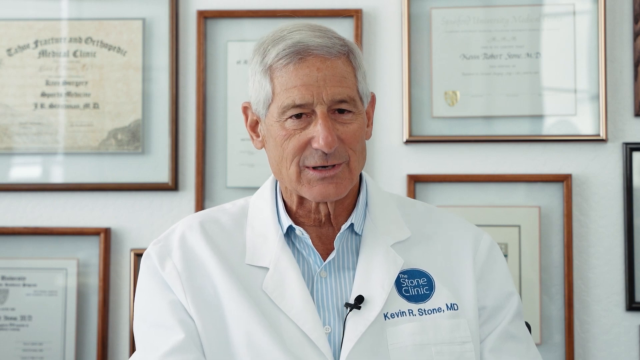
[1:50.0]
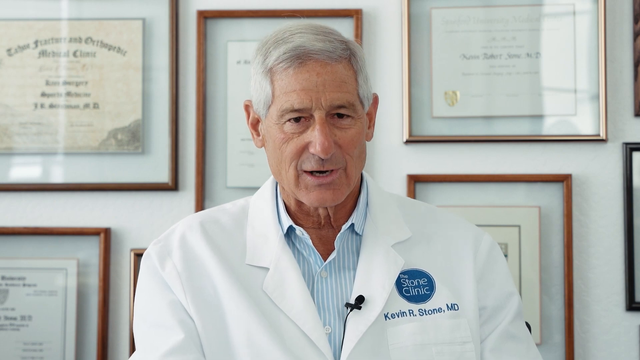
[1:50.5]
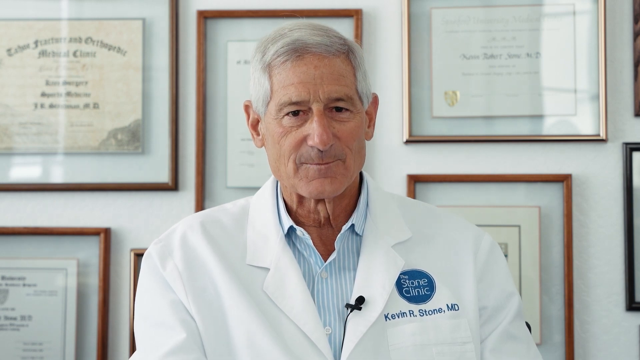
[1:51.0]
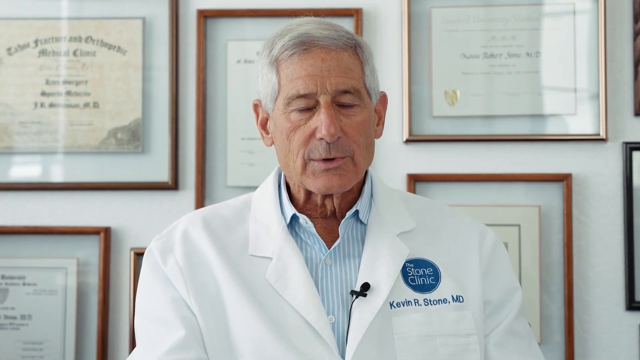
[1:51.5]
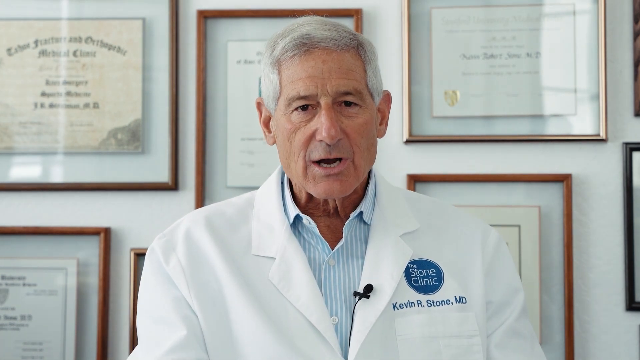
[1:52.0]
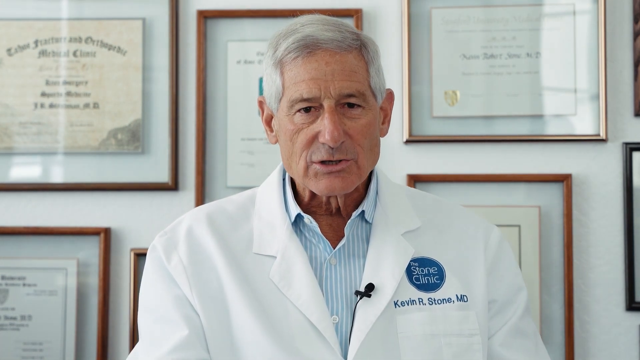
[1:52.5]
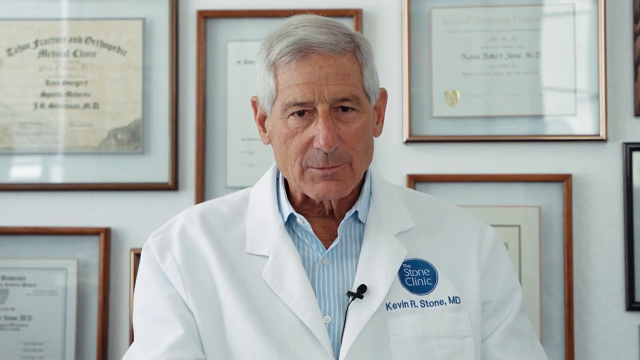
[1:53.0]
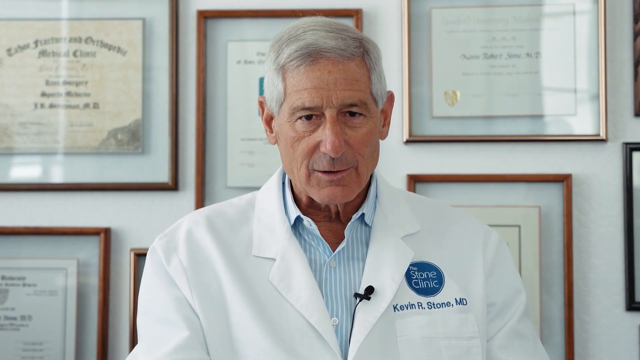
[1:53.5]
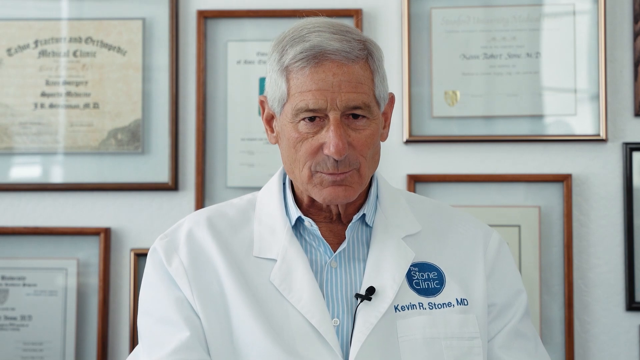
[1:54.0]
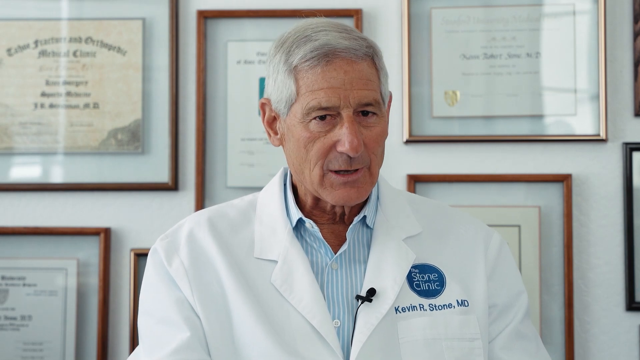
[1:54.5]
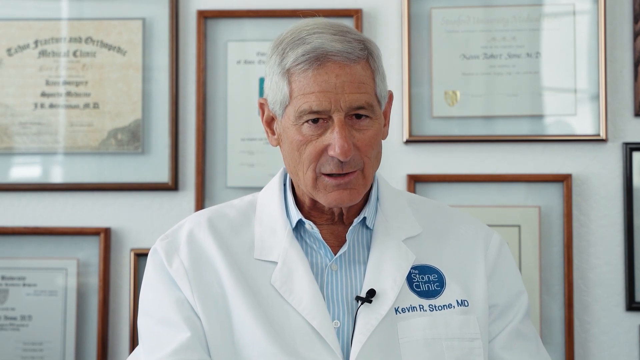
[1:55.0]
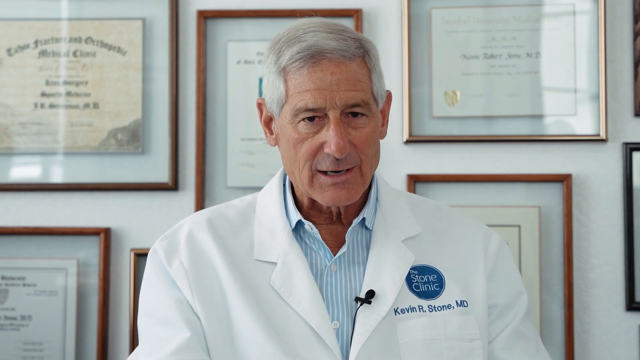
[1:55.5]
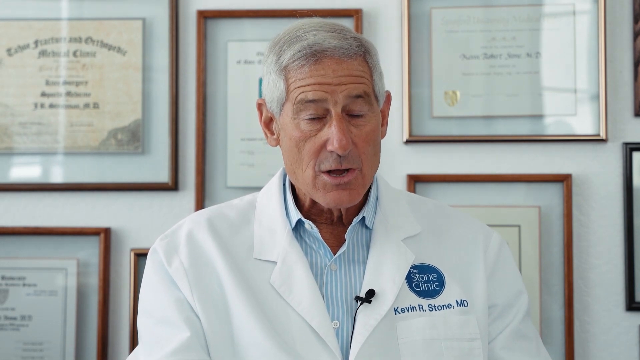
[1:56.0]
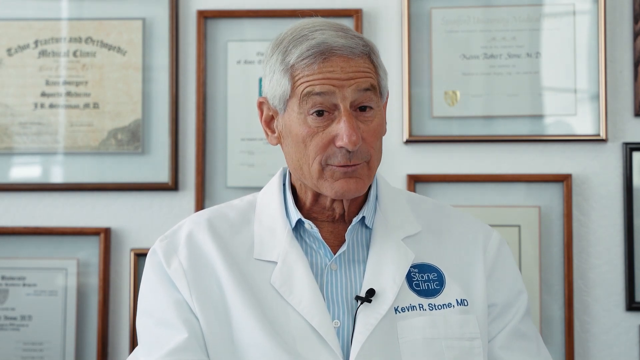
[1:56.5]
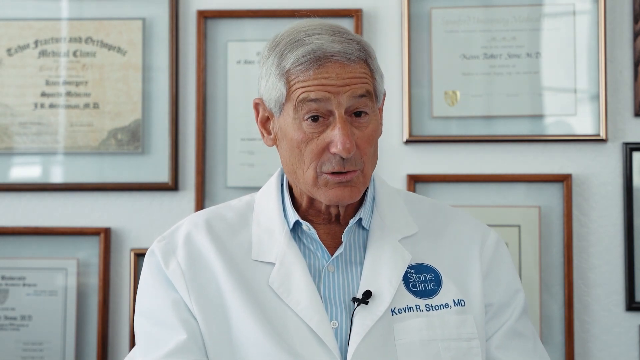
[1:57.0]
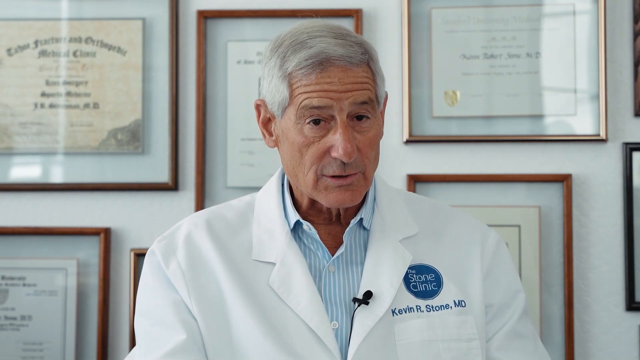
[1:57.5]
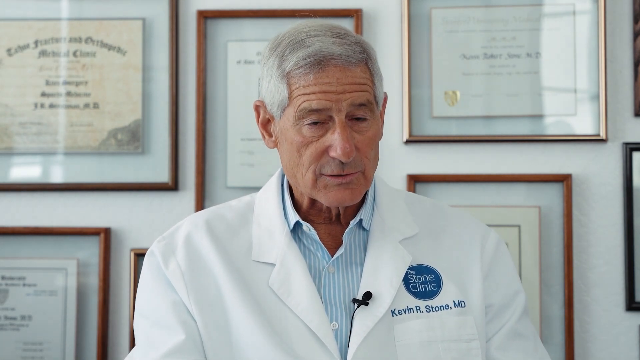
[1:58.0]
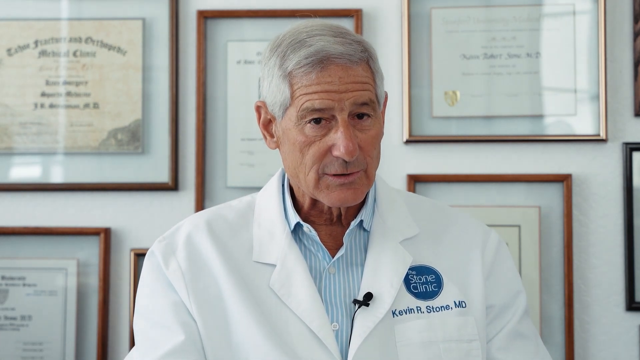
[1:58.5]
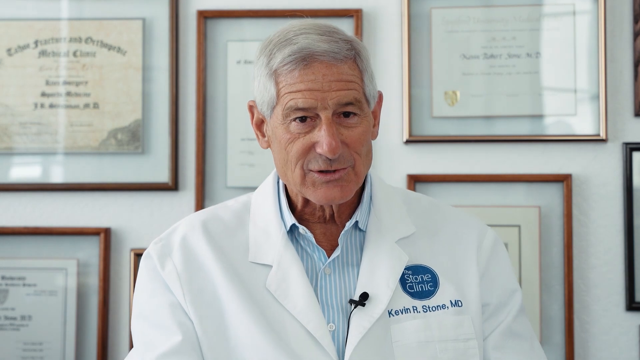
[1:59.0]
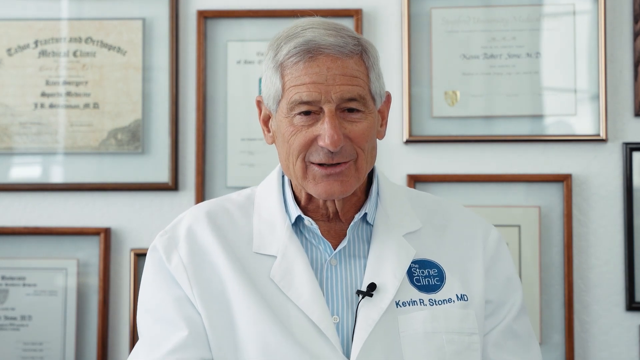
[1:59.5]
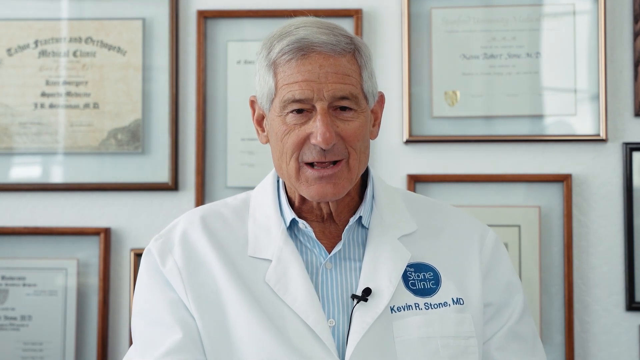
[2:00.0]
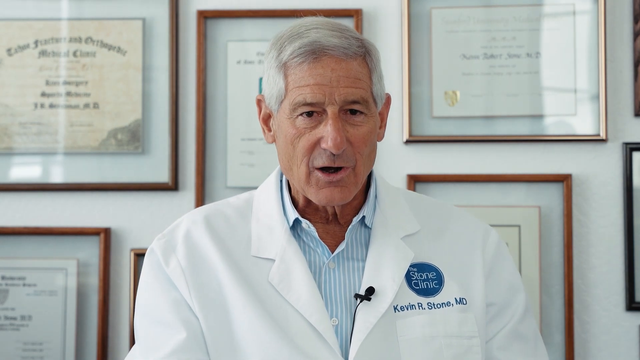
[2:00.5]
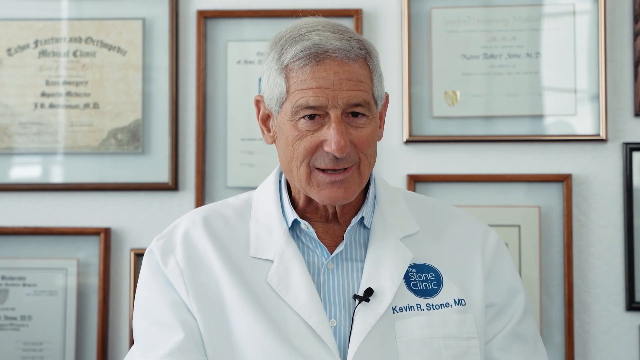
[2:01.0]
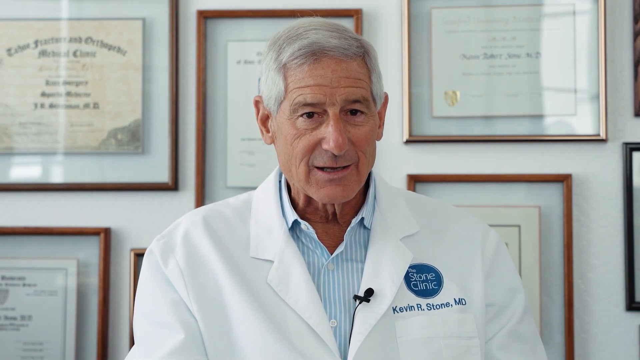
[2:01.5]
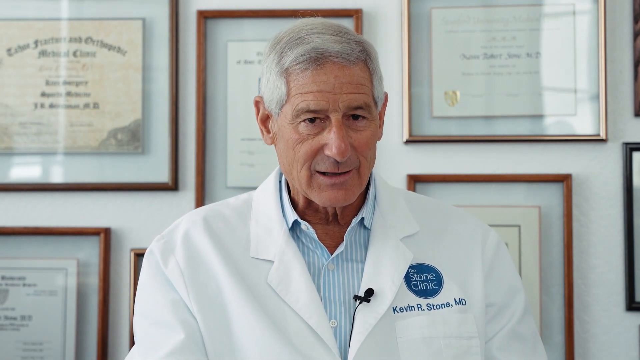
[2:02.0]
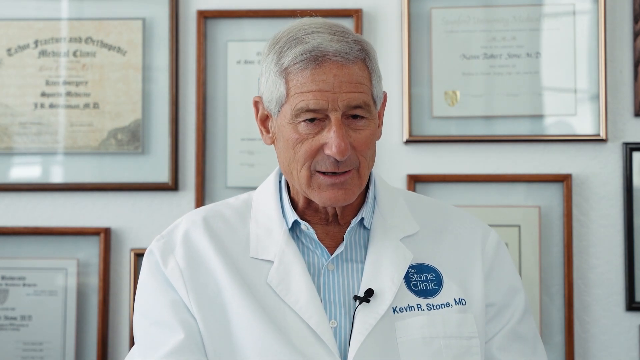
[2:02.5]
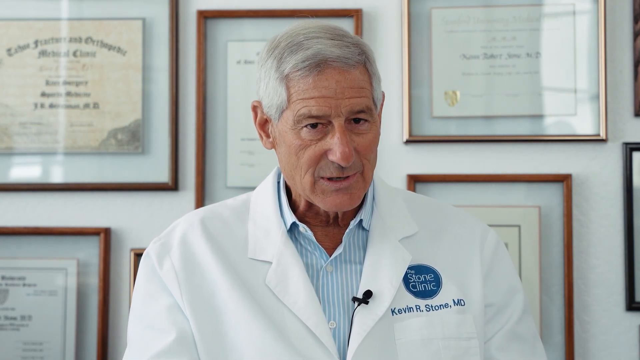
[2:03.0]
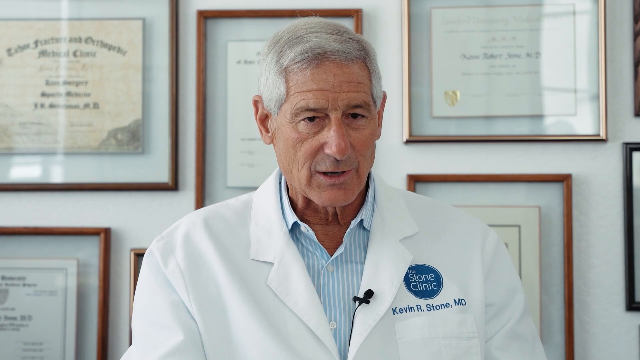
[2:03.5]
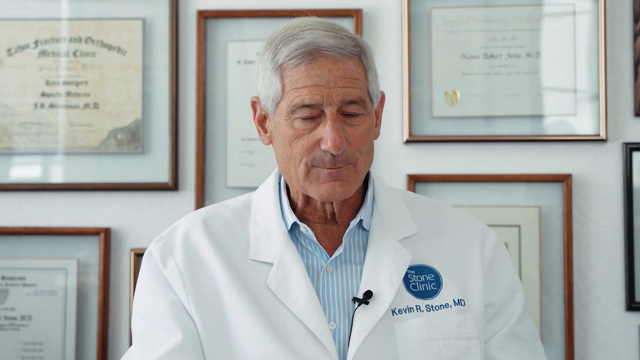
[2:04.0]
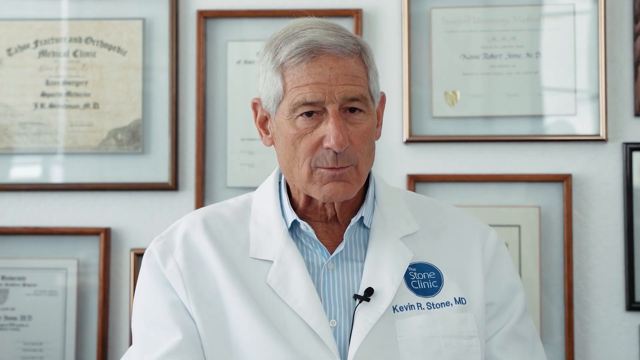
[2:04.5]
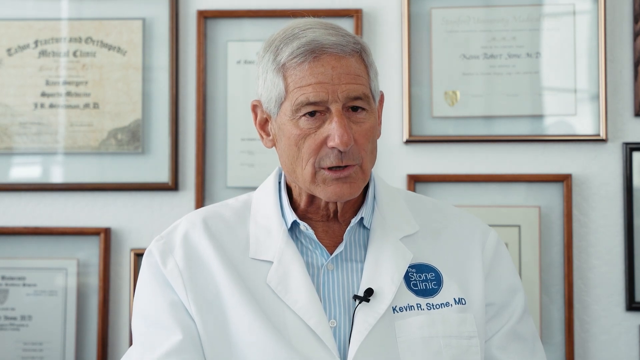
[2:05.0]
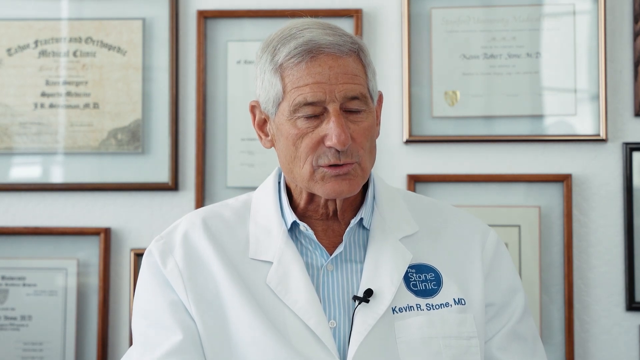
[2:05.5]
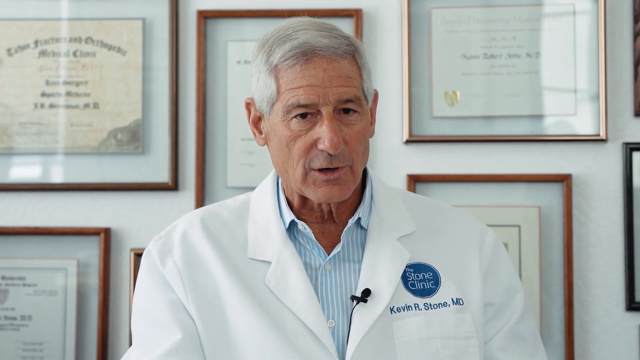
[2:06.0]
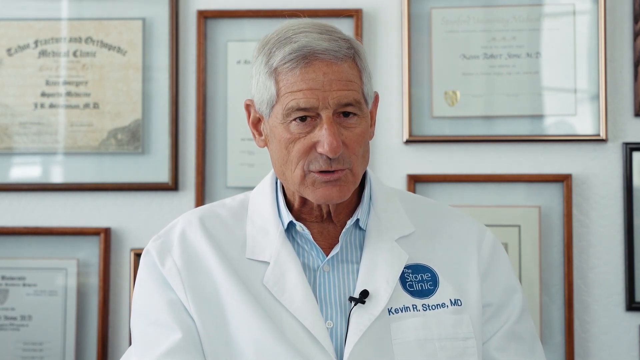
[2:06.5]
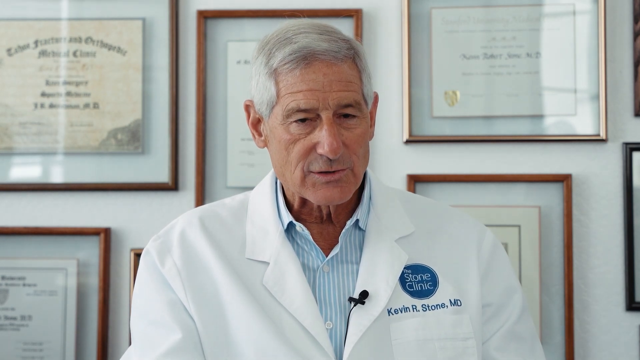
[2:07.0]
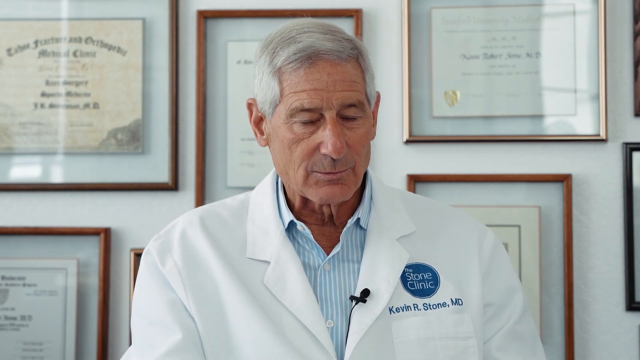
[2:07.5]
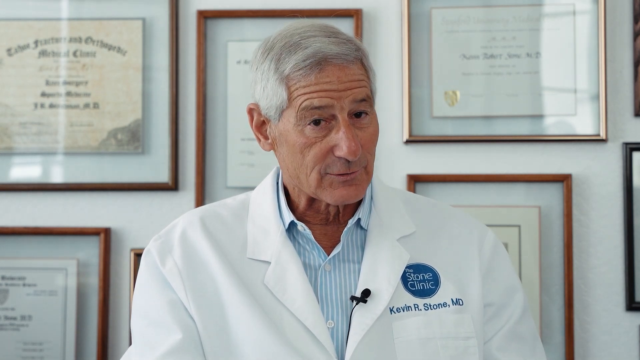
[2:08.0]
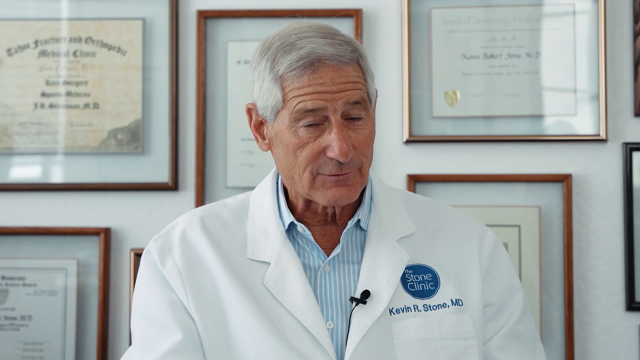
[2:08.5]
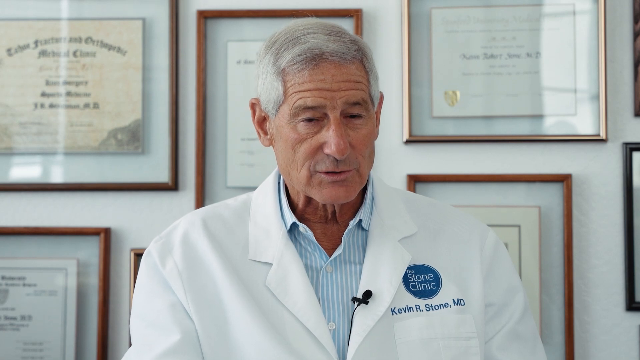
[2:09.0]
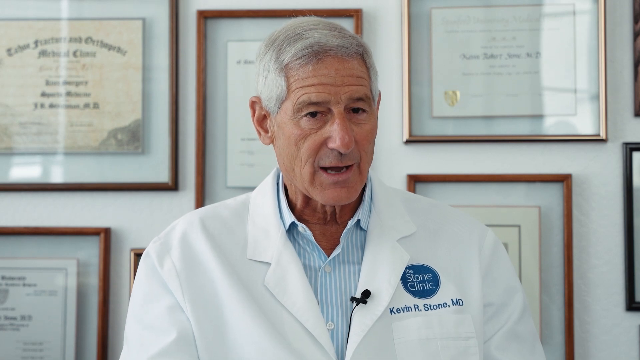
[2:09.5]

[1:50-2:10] Dr. Kevin R. Stone is being interviewed in his office, with quite a few certificates and diplomas hanging in frames on the wall behind him. He smiles and raises his eyebrows, as if trying to get a point across.